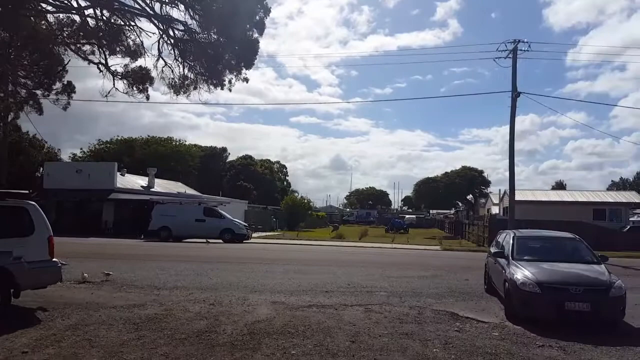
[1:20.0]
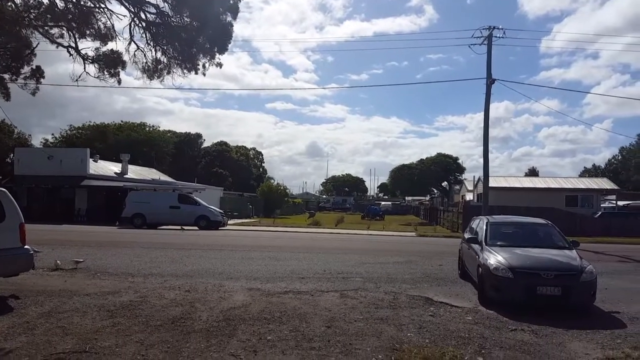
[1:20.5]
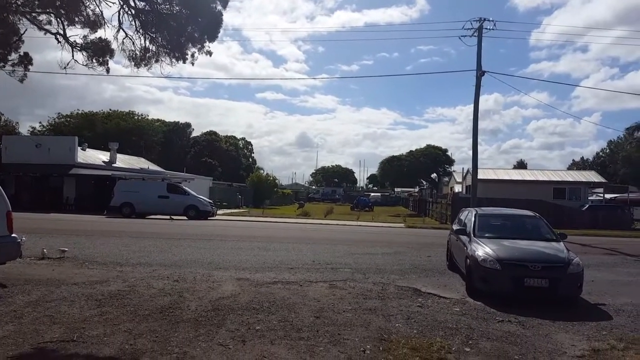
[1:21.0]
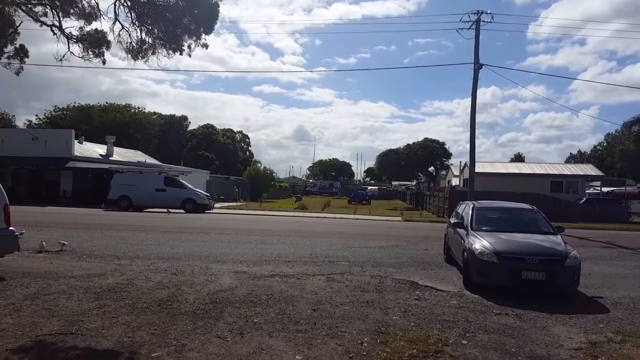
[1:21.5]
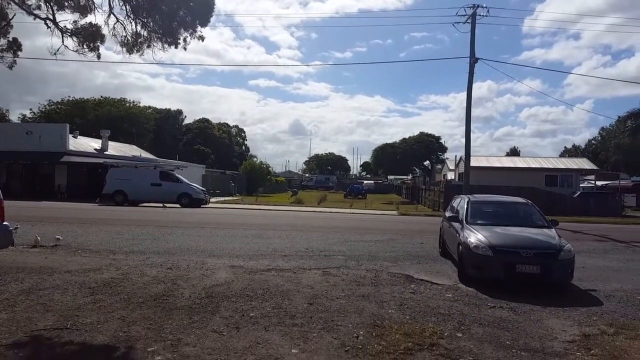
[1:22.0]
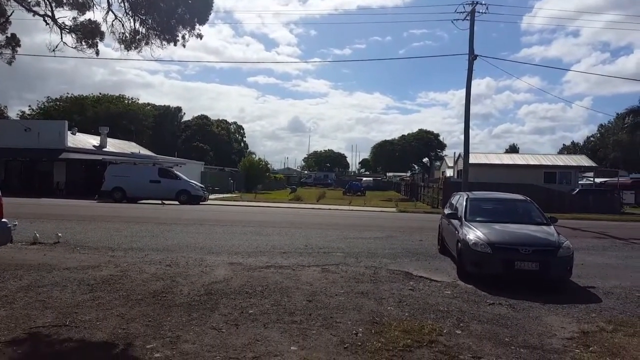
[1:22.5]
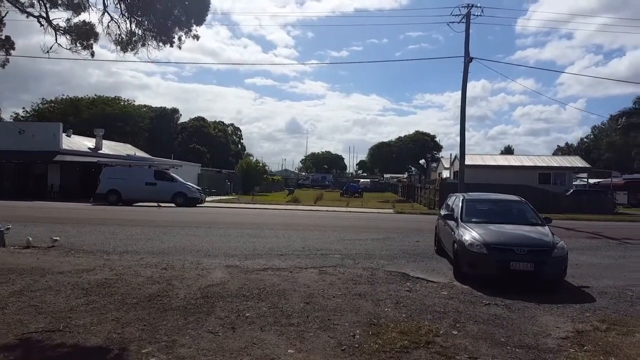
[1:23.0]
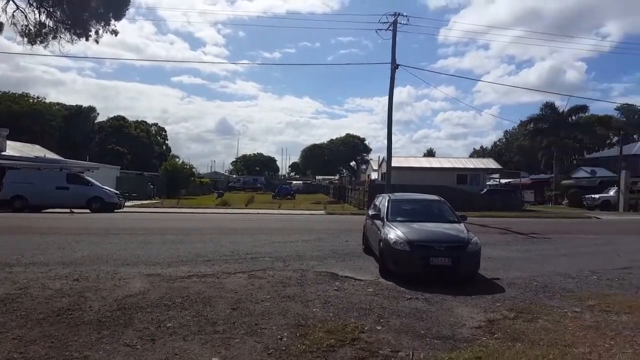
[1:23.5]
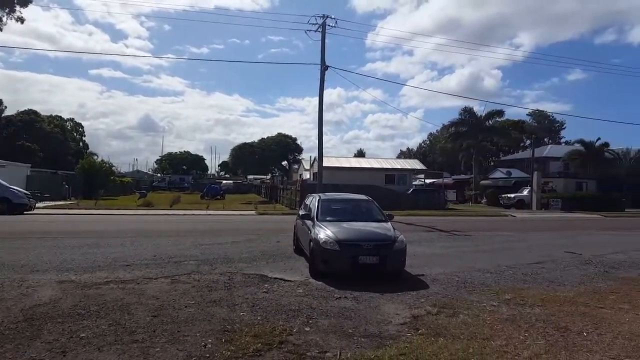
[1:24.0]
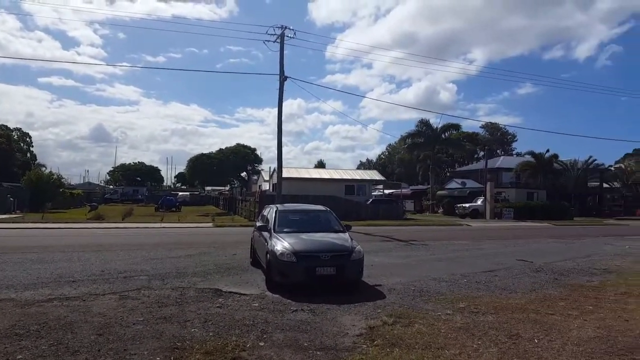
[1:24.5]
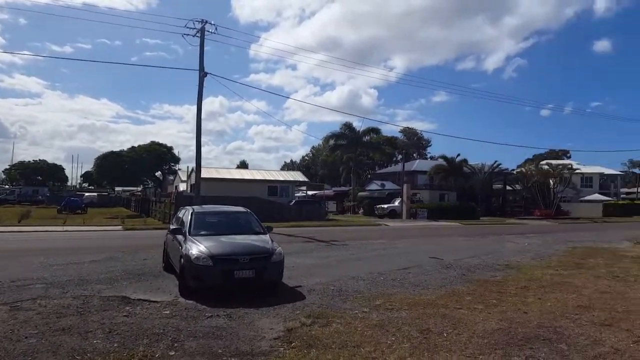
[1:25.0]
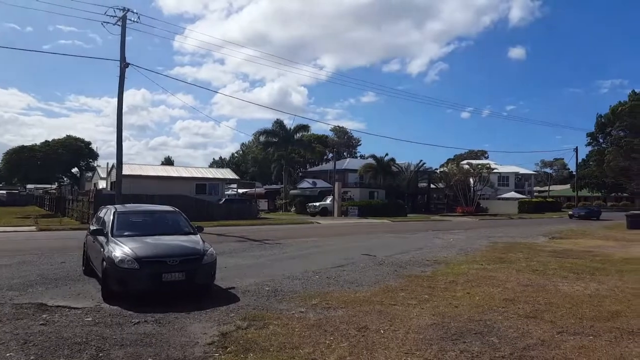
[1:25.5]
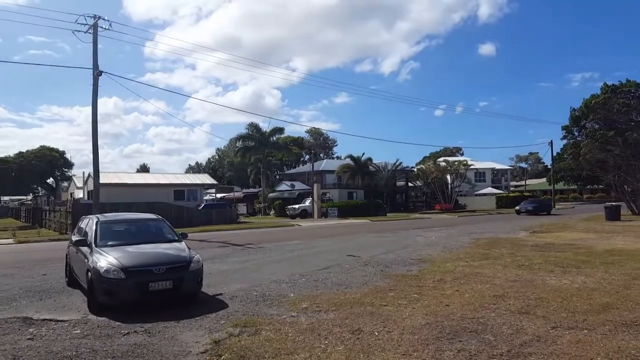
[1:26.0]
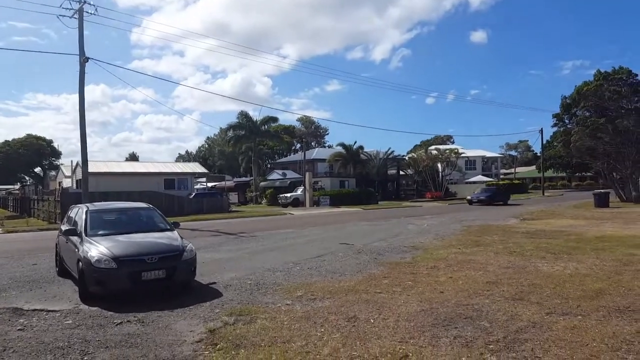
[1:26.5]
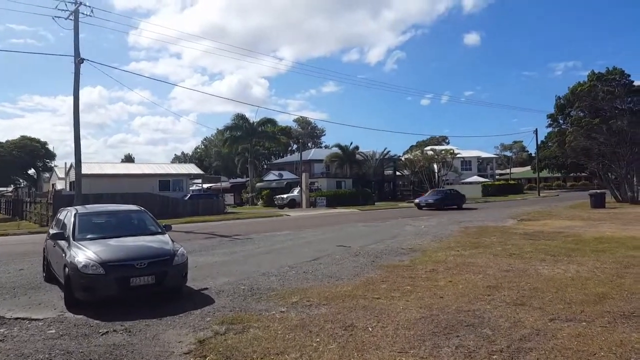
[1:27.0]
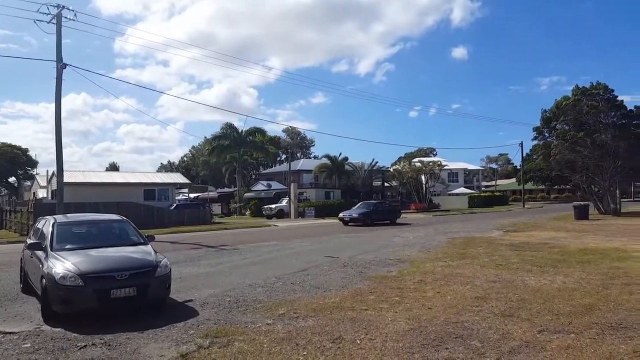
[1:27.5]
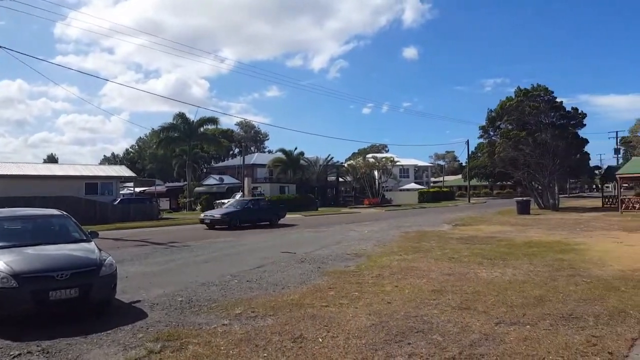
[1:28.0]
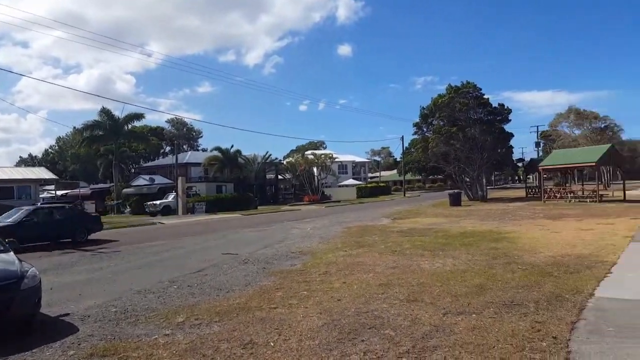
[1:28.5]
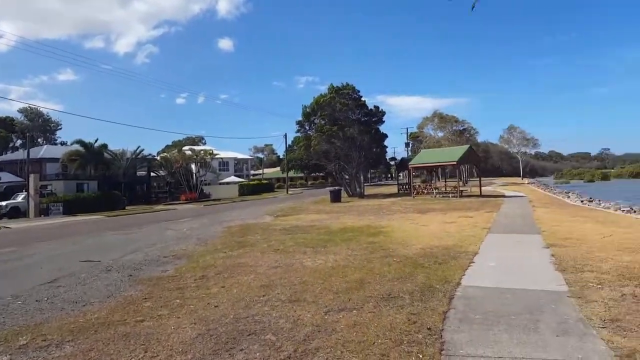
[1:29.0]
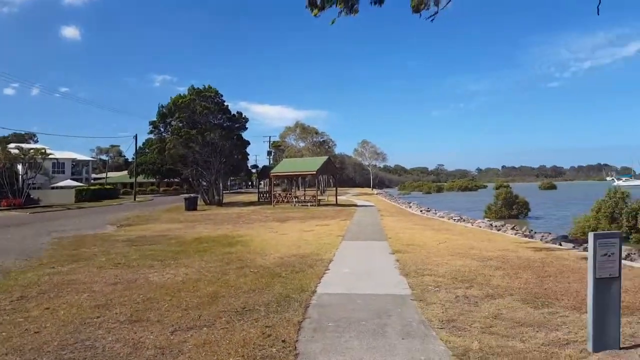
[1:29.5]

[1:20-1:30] The camera looks across a parking lot next to a lake, slowly panning from left to right over buildings and cars. A green field appears, then houses with palm trees; the houses look like they are two stories. A small blue sedan drives by toward the left. The camera pans further to the right, showing a big white luxurious house, then a grassy area and a pathway right next to the lake. There look to be a lot of benches with overheads, and cut, maintained grass runs along the path. The lake is on the right side. Power lines run along the street along the parking lot. The light blue sky has some clouds, and it looks like a very clear, nice day.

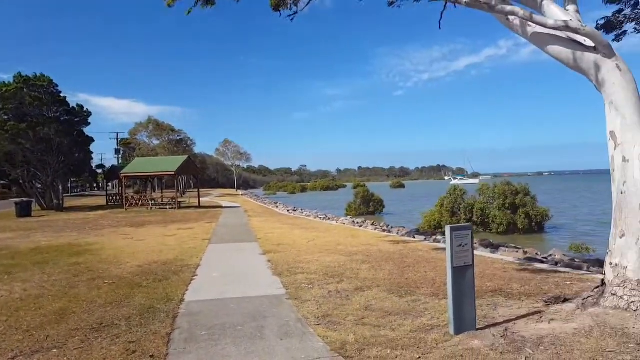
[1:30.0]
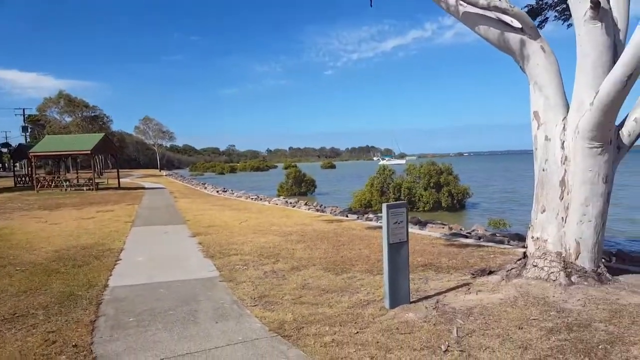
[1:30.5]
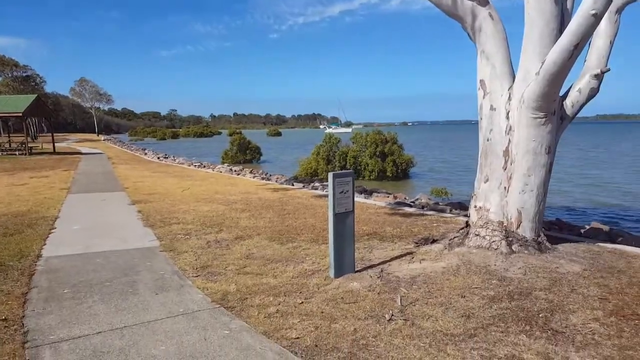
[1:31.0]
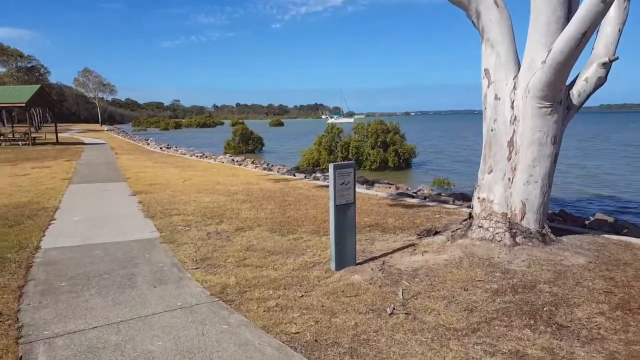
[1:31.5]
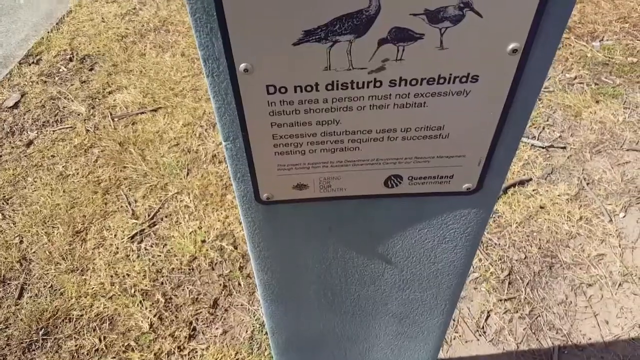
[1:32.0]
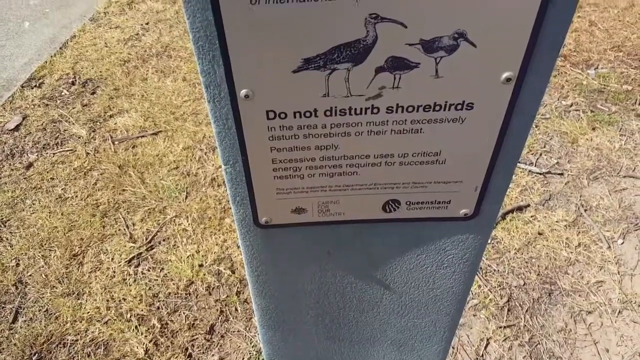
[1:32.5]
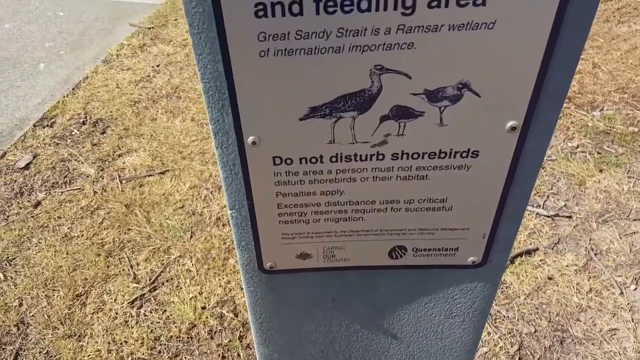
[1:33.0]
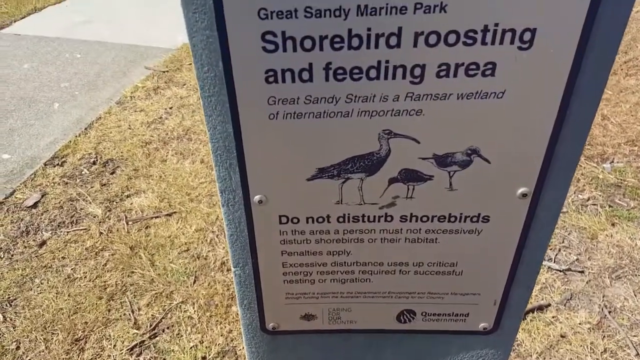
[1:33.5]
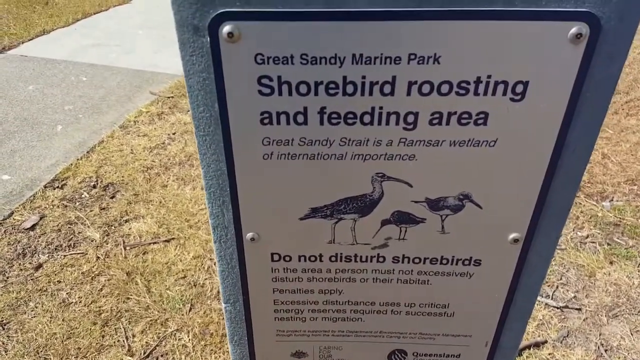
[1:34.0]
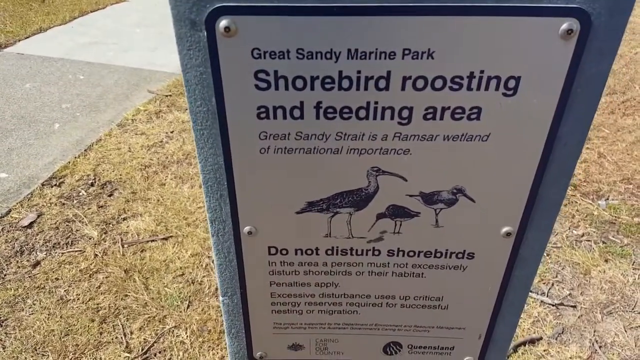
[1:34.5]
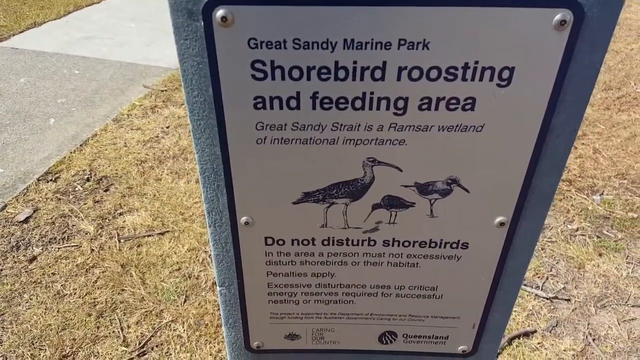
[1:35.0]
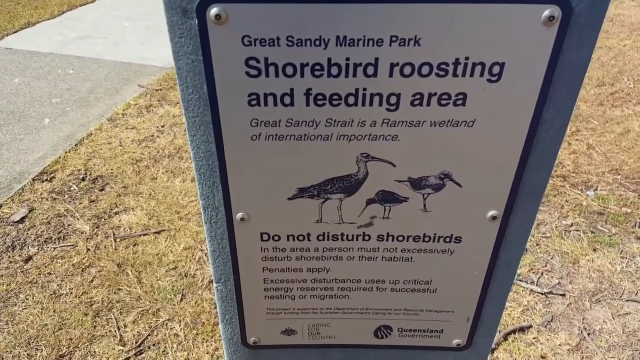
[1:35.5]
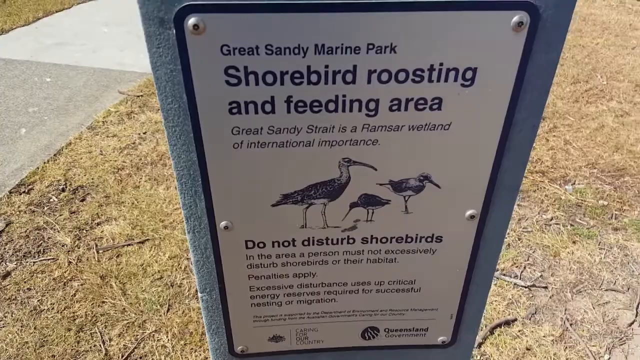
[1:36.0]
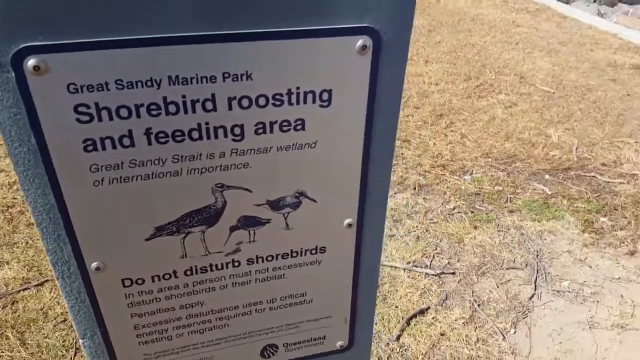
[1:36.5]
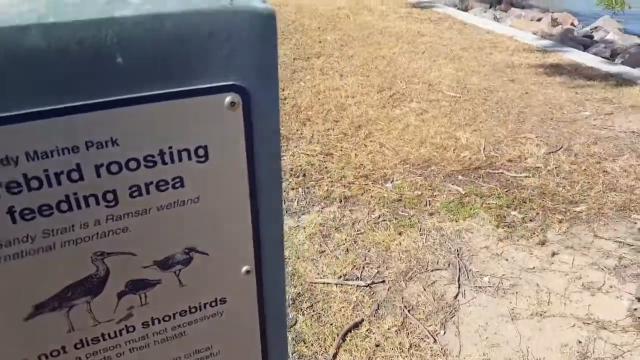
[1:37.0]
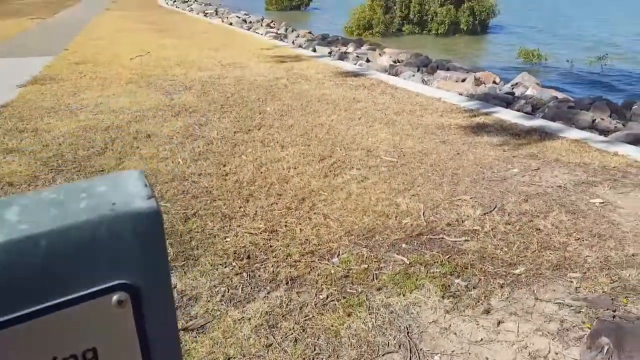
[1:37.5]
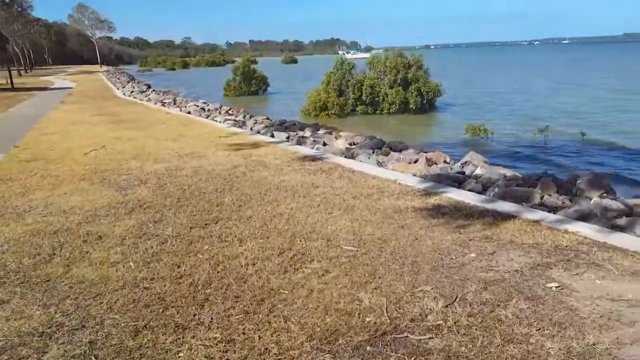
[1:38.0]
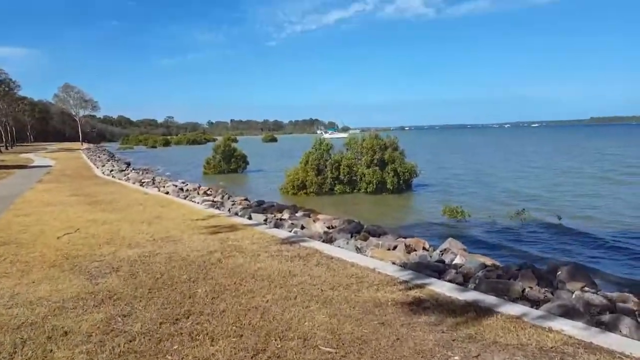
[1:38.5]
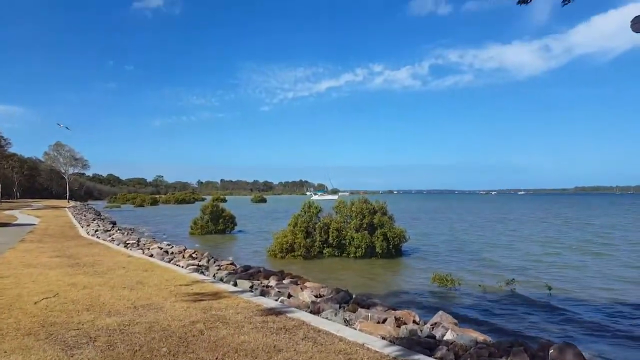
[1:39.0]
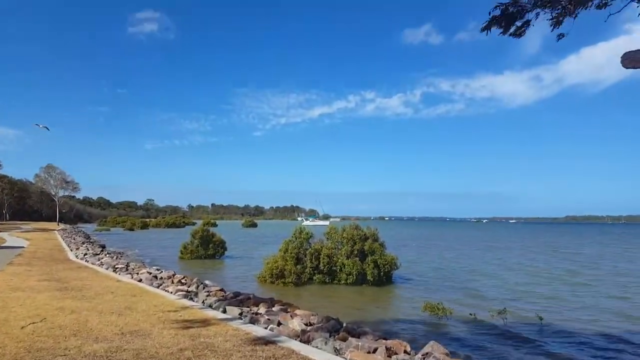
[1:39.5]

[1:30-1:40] The camera looks down a pathway going around a lake, with very short yellow grass on both sides that looks very well maintained. To the right, a sign sticks out of one of the grassy areas of the walkway. The camera zooms in on the sign, which reads "do not disturb shorebirds. In the area a person must not excessively disturb shorebirds on their habitats. Penalties apply. Excessive disturbances use up critical energy reserves required for successful nesting or migration." At the bottom right it reads "Queensland Government". The camera pans up a bit to the top text, which reads "Great Sandy Marine Park, shorebird roosting and feeding area", followed by text beginning "Great Sandy Strait is a" that mentions a wetland of international importance. There are three pictures of birds on the sign. The camera focuses on the sign a little, then swerves off to the right to look at the lake, where there are several submerged trees and a shore made of rocks bordering the path around the lake.